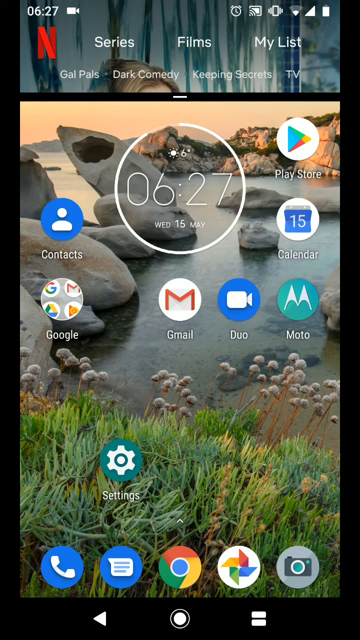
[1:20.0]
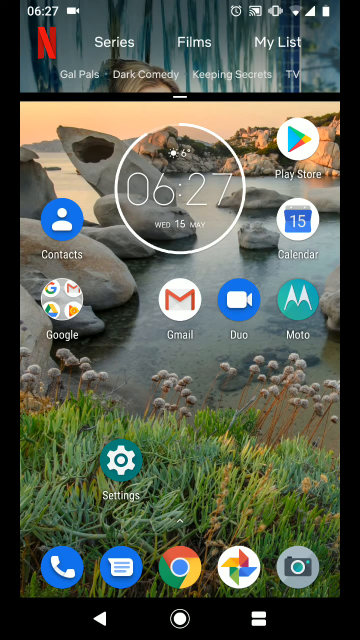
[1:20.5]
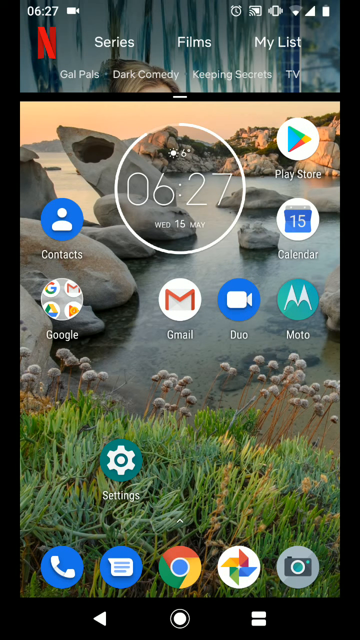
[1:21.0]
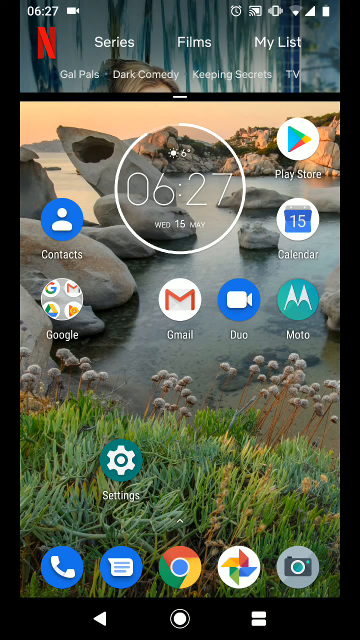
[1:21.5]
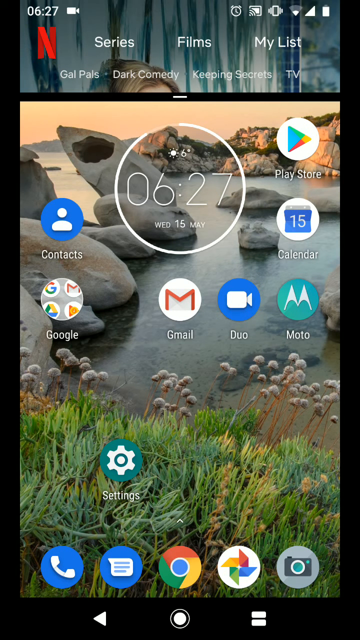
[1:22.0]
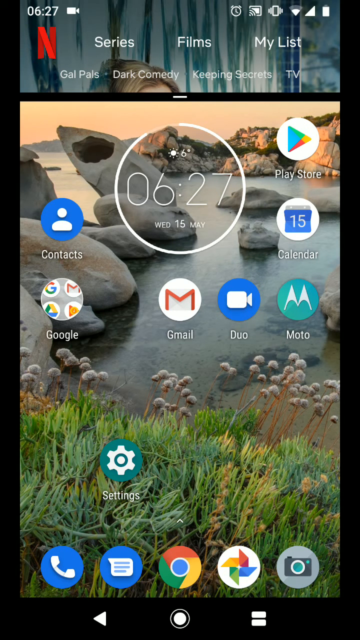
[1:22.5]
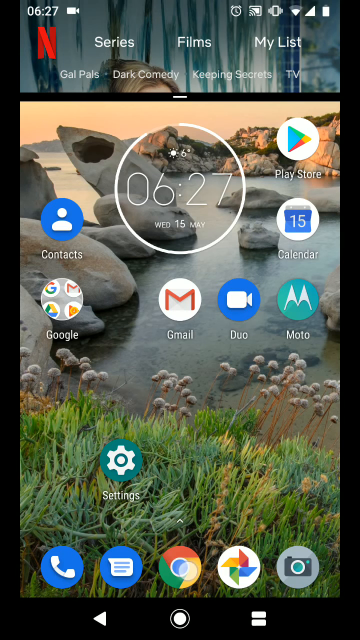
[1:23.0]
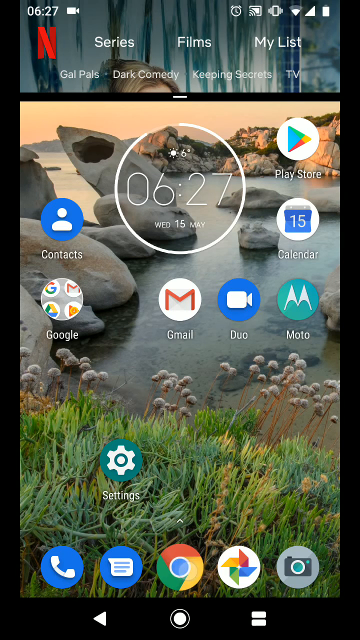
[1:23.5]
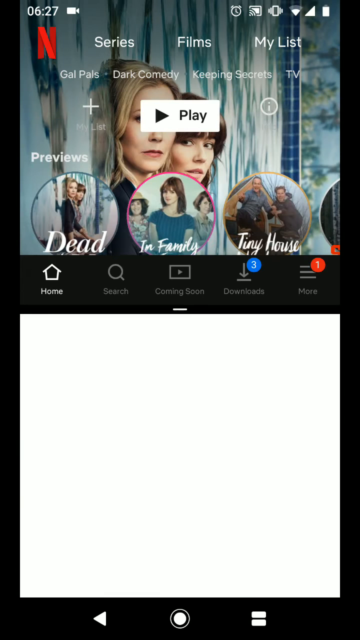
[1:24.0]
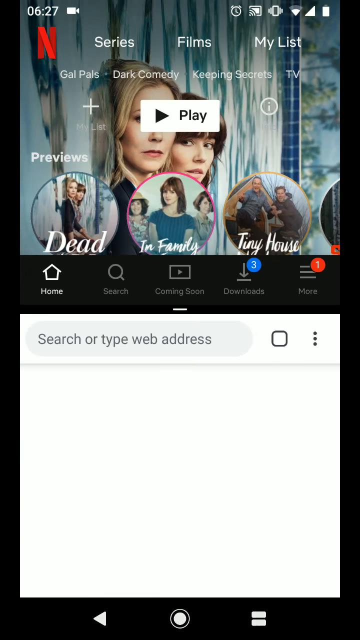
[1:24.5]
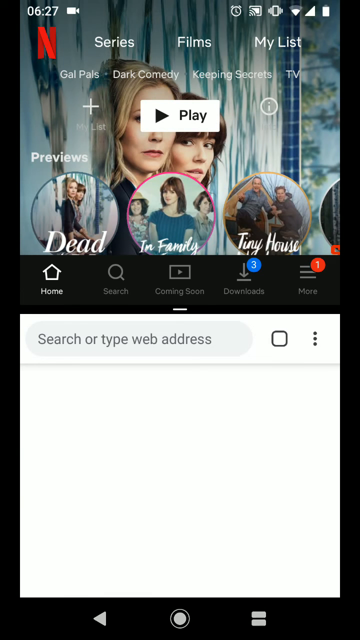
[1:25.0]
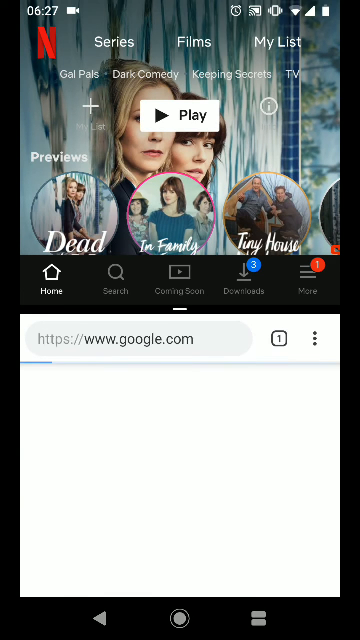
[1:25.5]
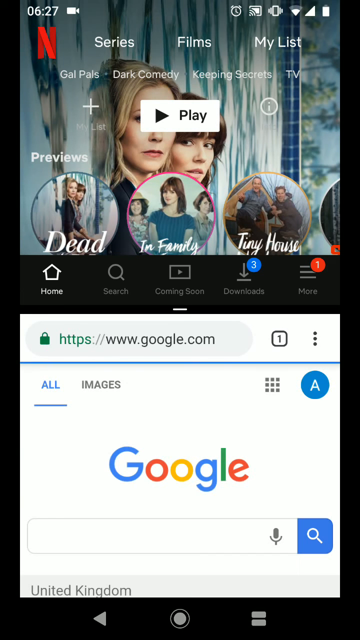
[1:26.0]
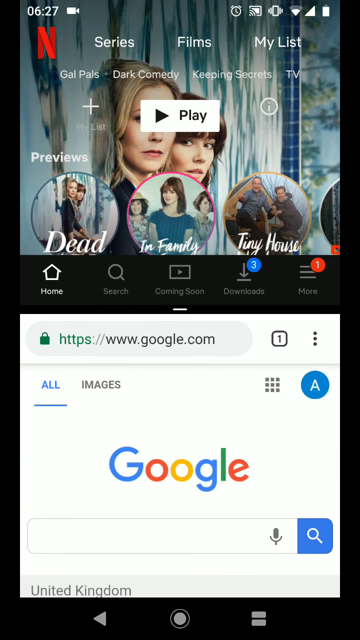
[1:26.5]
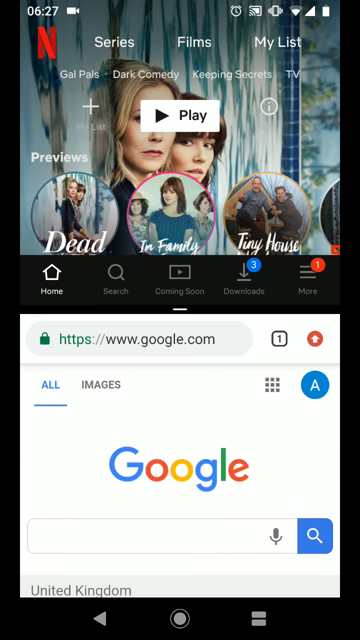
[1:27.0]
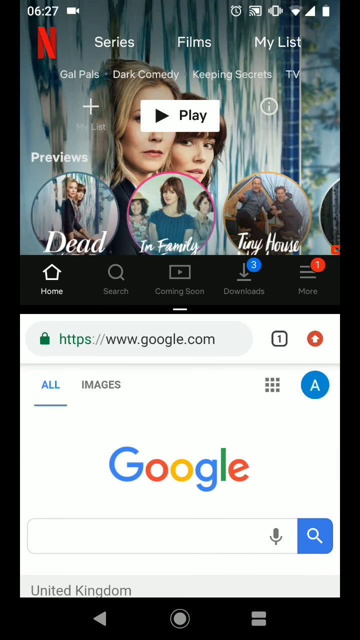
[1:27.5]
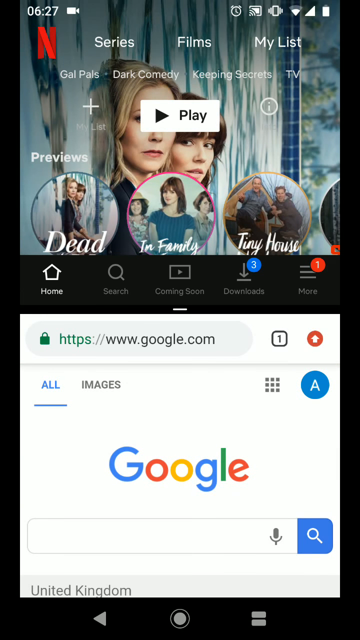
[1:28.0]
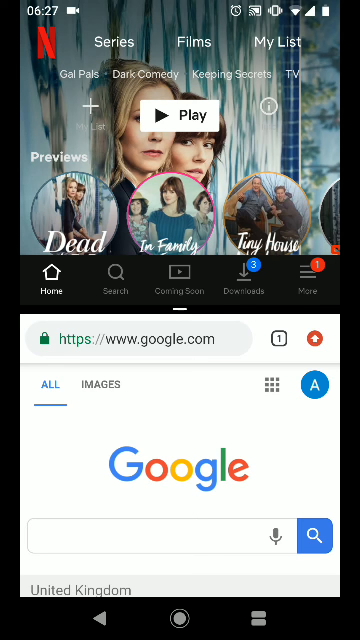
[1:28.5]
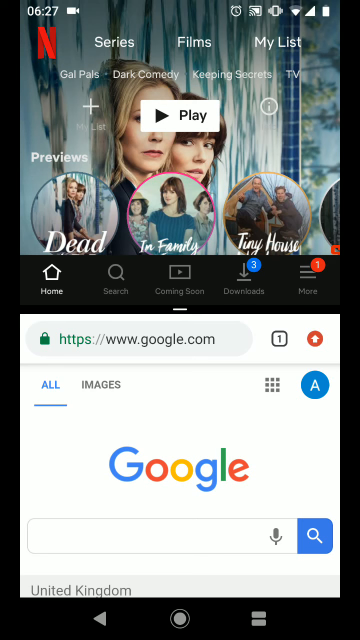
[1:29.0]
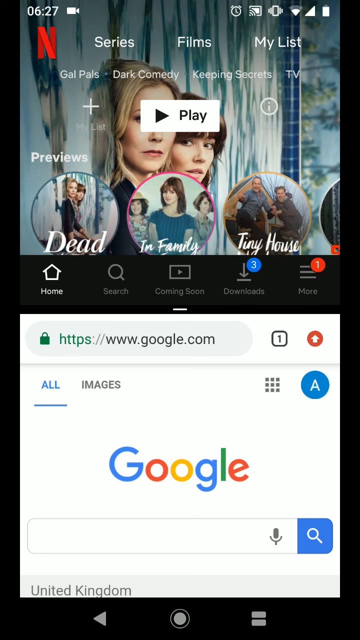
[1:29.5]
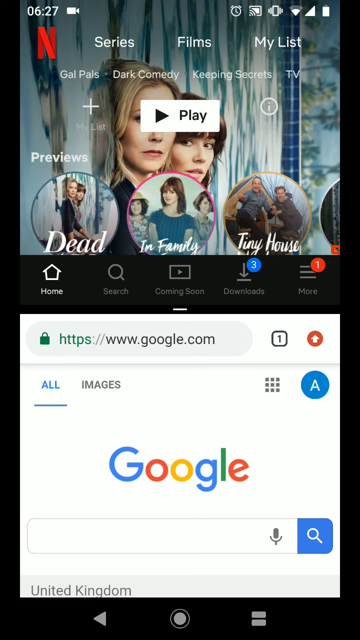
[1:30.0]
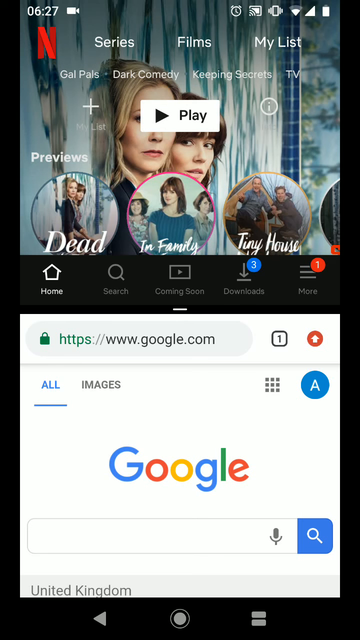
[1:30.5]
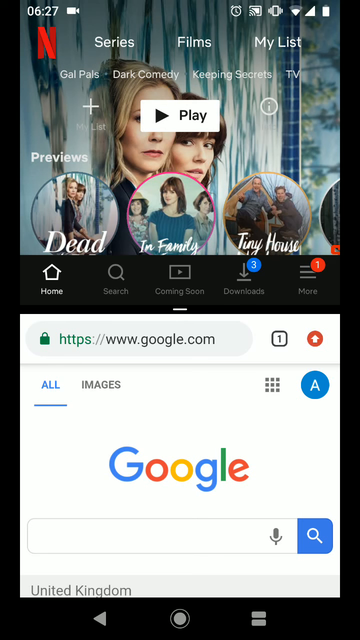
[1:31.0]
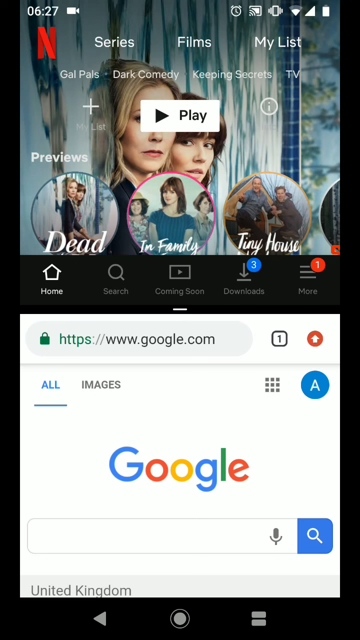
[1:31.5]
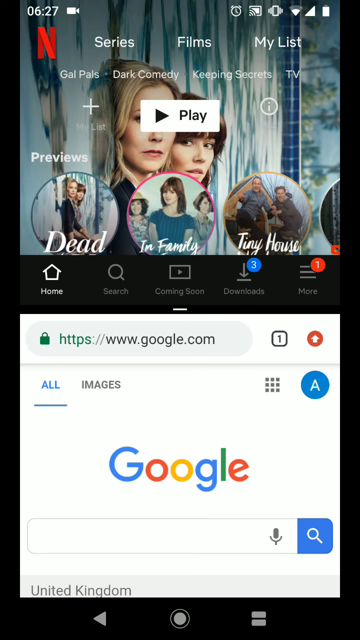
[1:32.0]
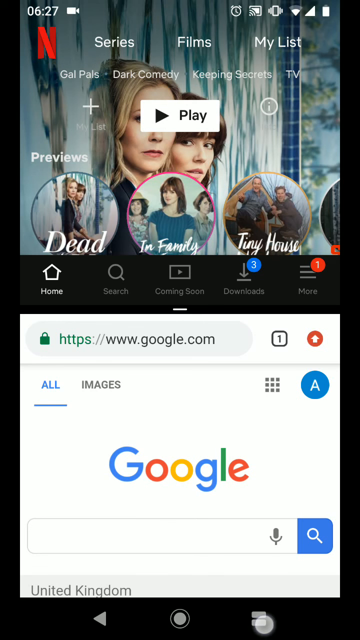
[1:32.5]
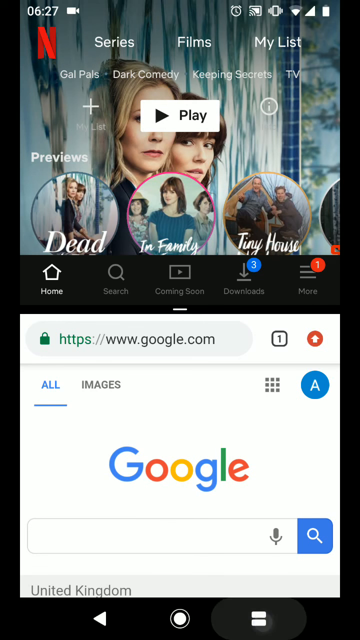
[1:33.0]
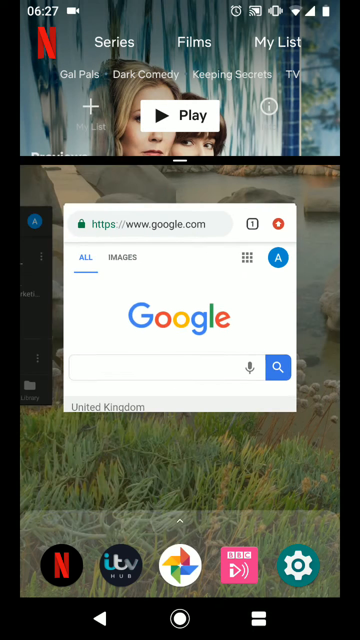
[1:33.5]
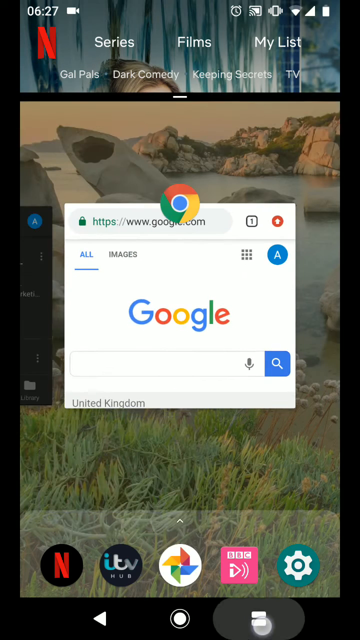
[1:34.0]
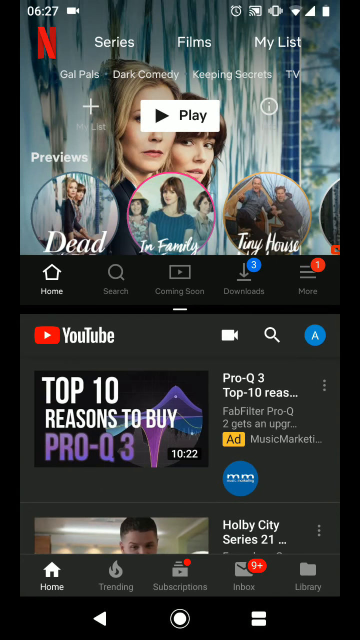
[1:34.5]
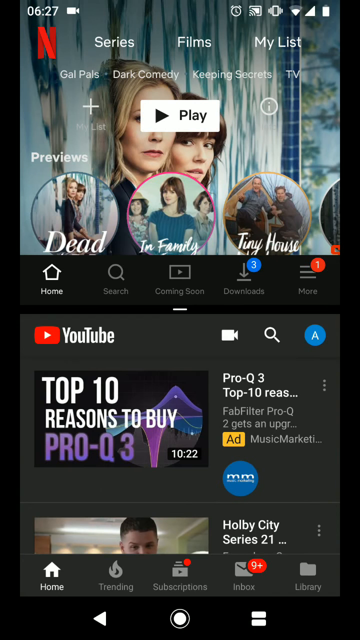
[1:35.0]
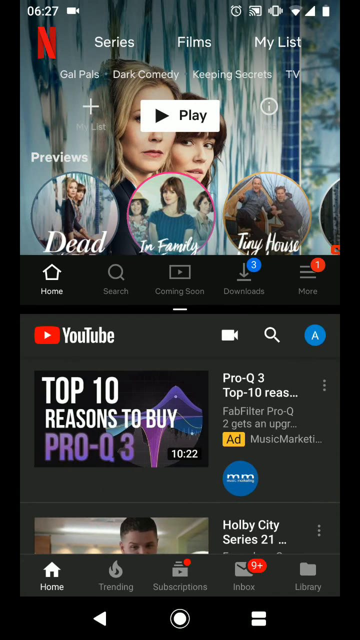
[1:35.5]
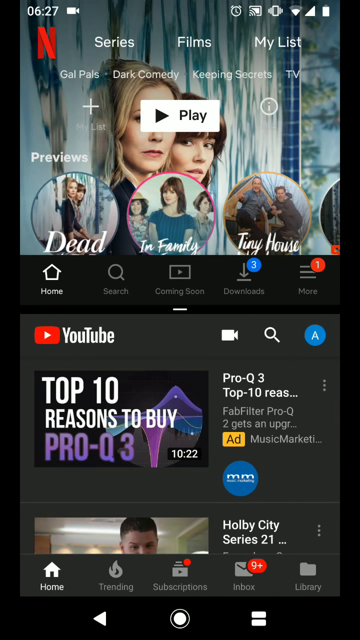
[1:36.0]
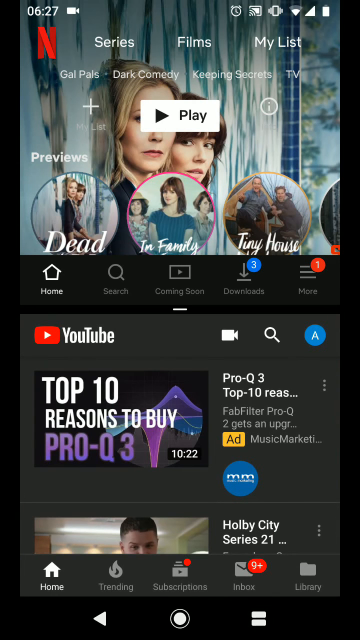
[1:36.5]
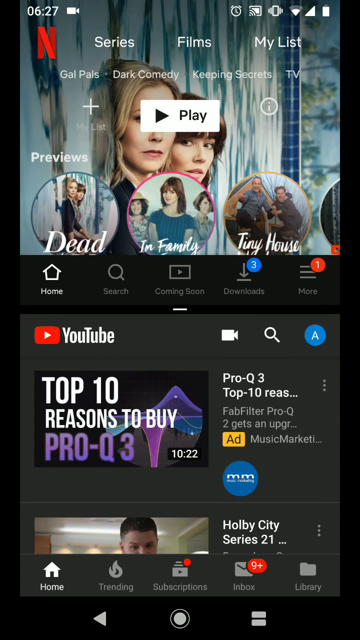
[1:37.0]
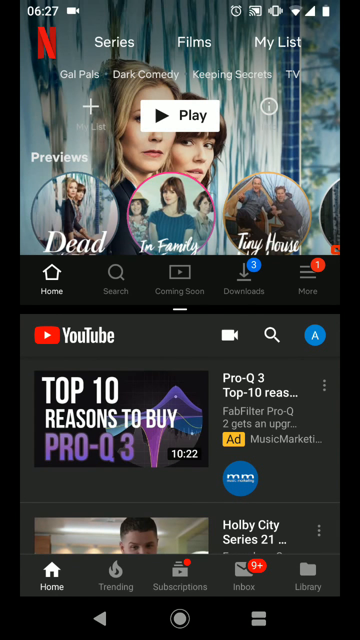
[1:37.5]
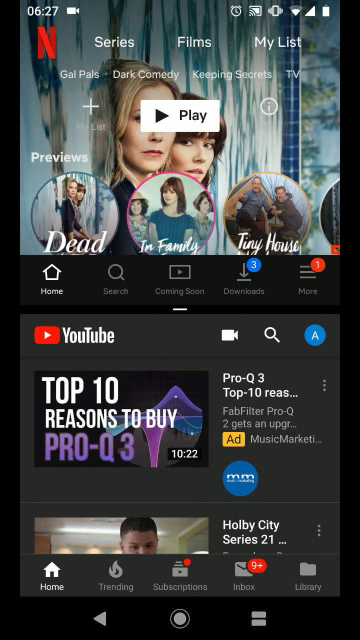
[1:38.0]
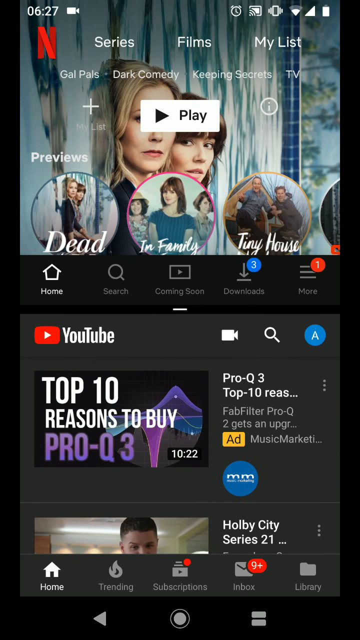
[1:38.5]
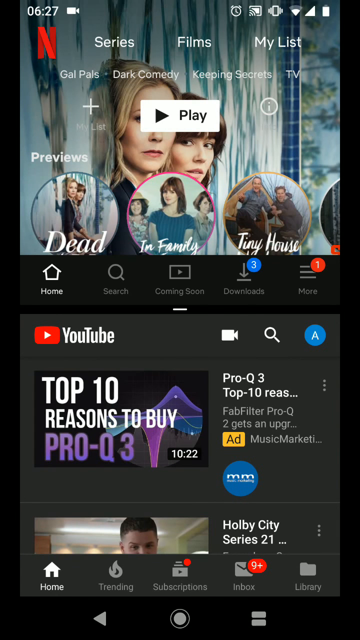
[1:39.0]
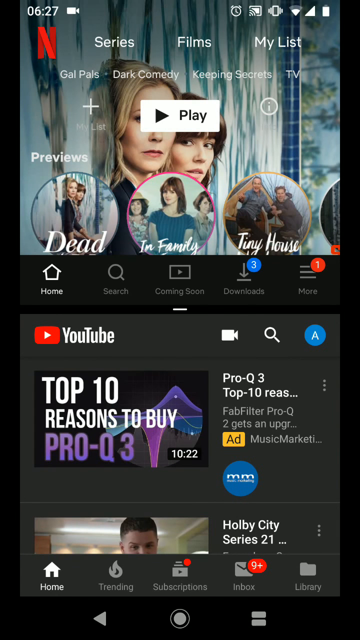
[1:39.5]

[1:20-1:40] The screen is split with Netflix on top and the home page in the lower section. The user selects the Google Chrome icon, and the Google home page is displayed for a few seconds. The user then goes to YouTube once again, and the YouTube home page shows a bunch of videos that the user does not click on. The user returns to the home page, which shows the time 06:27 and the date "Wednesday, 15th of March", while Netflix remains in the topmost section of the split screen. The home screen below Netflix still has the contact icon, Google, Gmail, Duo, Moto, Calendar and Google Play. The background has rocks, water, grass and leaves. The top section of the apps has icons for calling, messaging, Google Chrome, pictures and the camera.